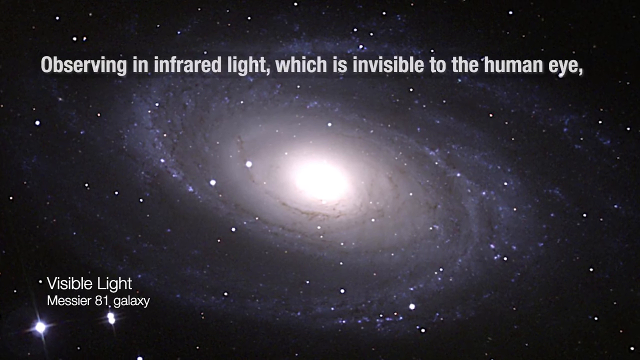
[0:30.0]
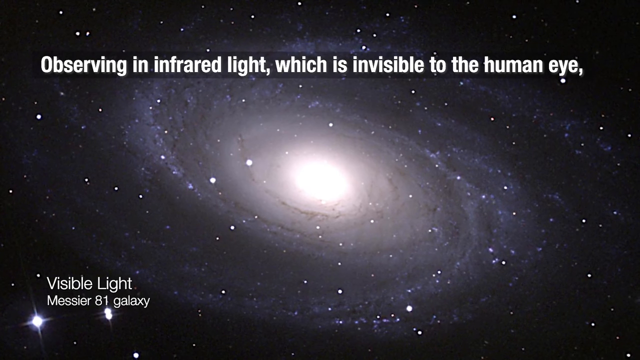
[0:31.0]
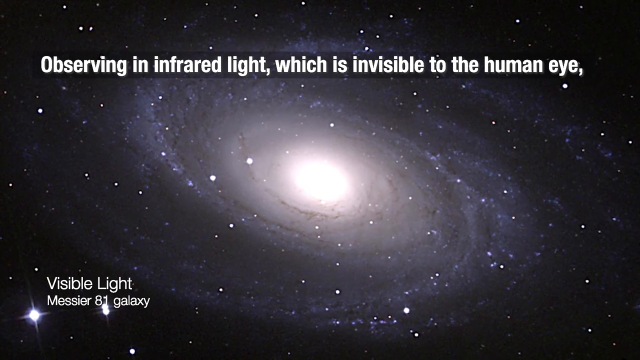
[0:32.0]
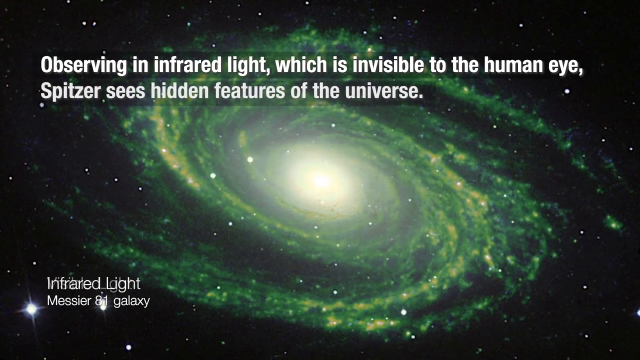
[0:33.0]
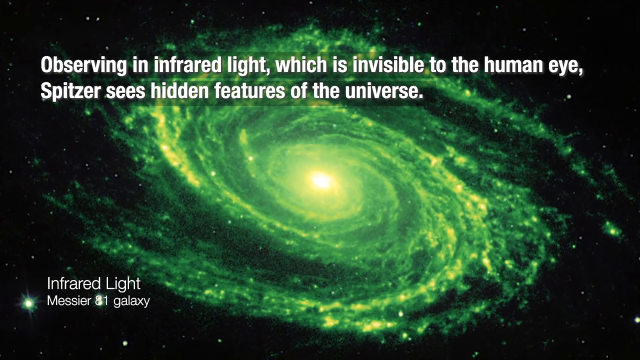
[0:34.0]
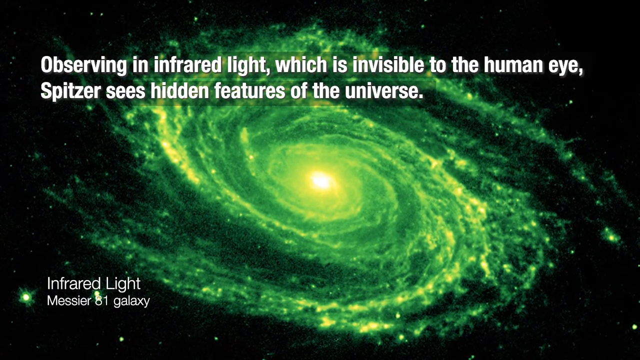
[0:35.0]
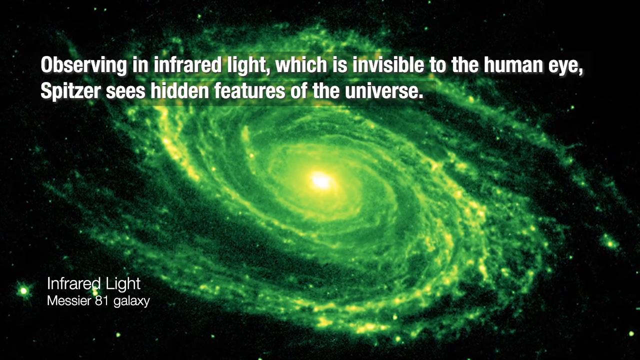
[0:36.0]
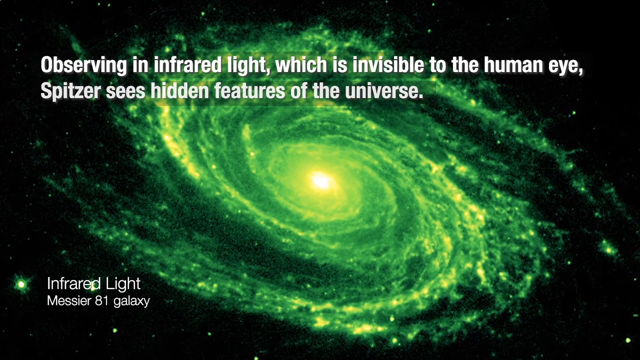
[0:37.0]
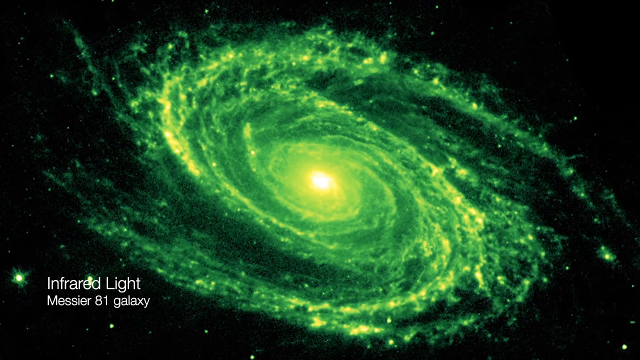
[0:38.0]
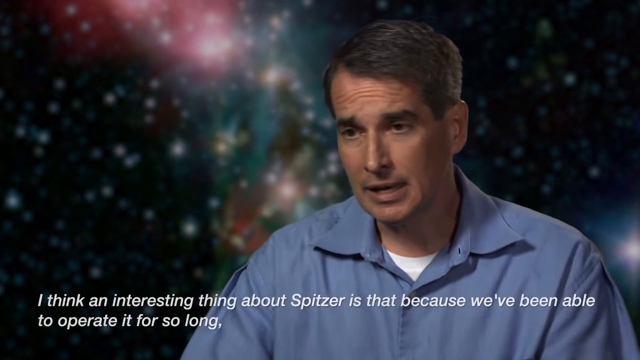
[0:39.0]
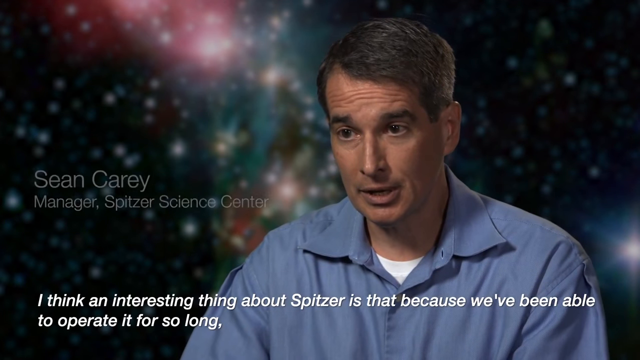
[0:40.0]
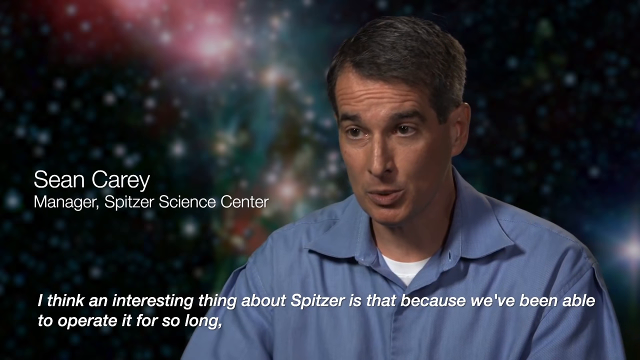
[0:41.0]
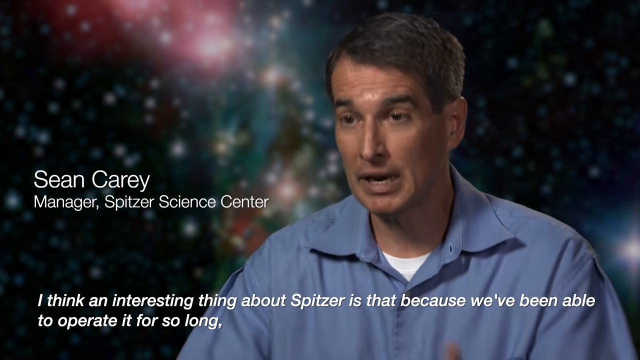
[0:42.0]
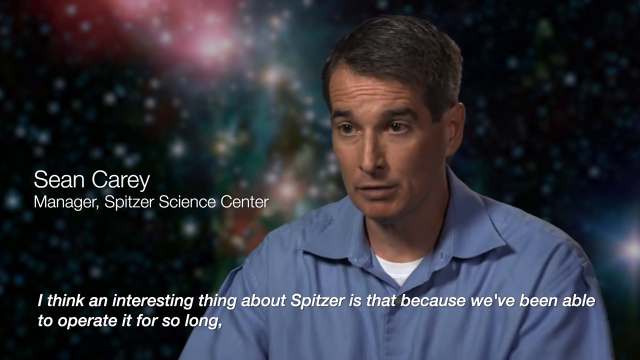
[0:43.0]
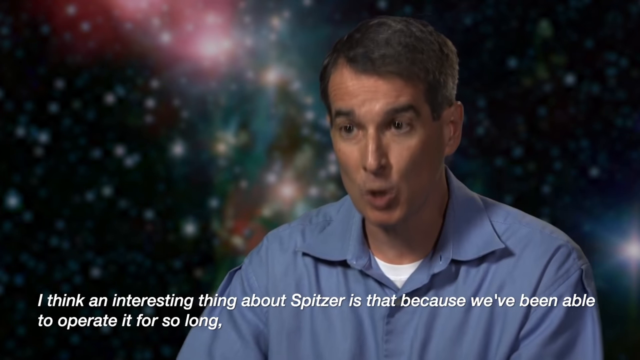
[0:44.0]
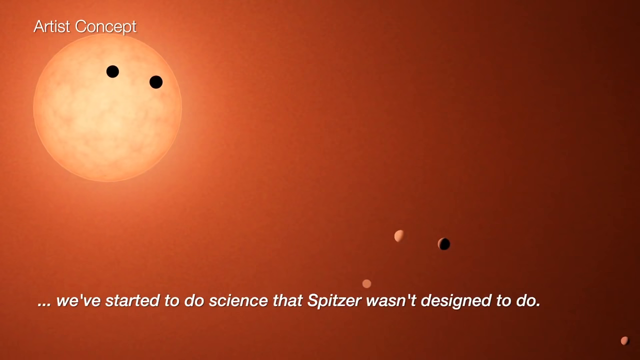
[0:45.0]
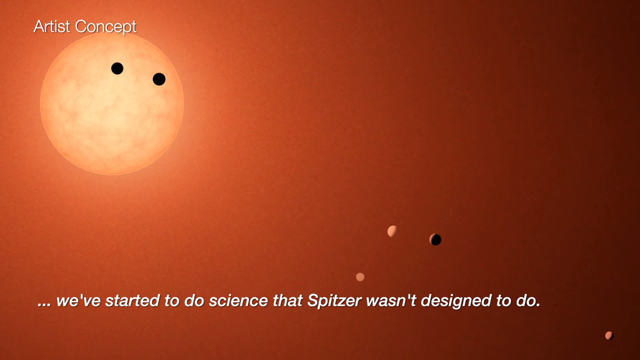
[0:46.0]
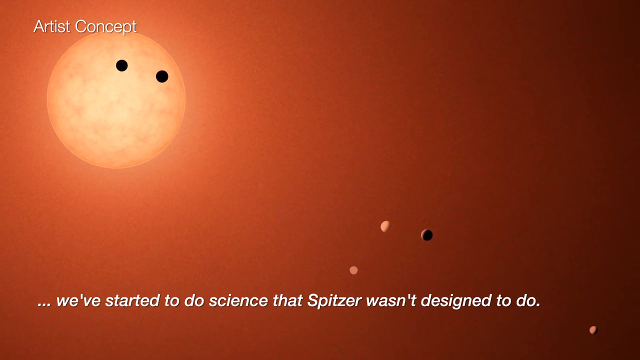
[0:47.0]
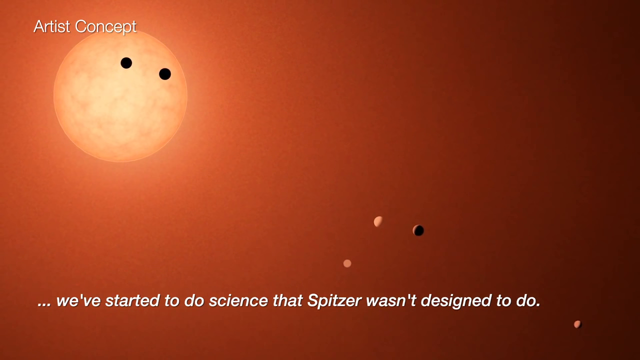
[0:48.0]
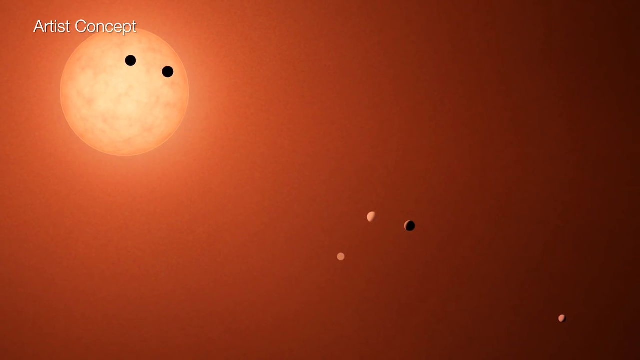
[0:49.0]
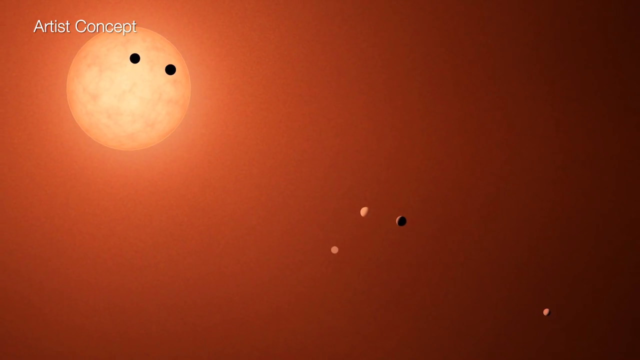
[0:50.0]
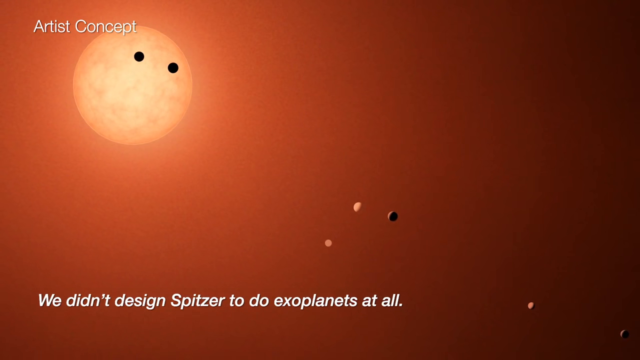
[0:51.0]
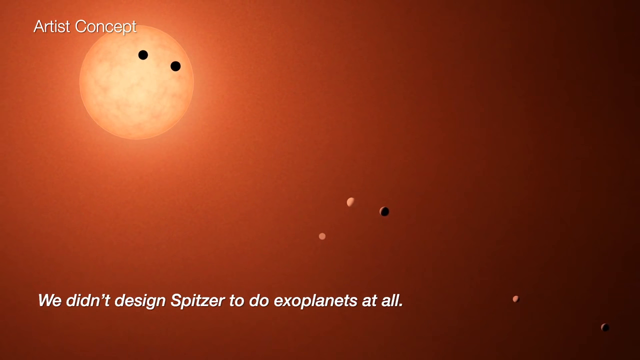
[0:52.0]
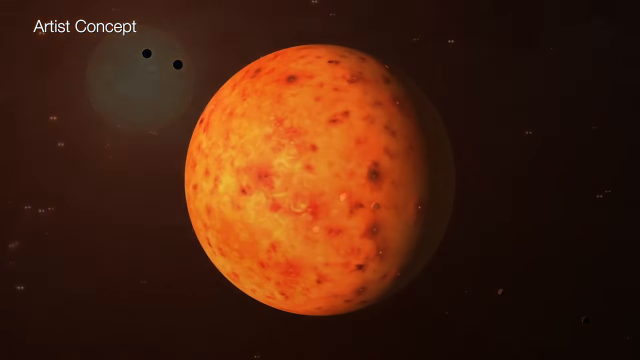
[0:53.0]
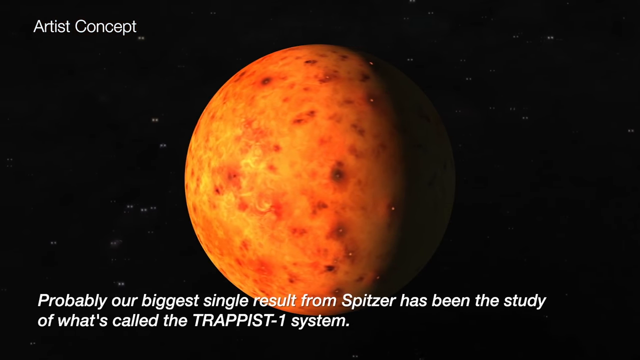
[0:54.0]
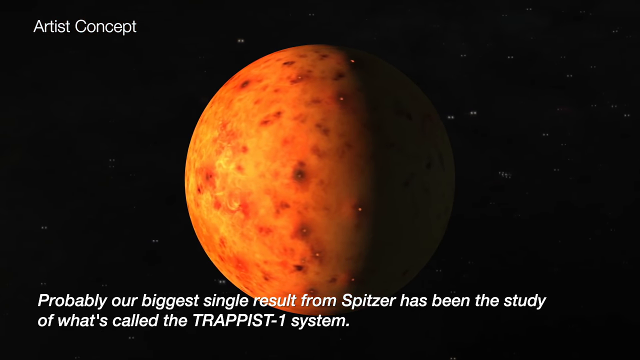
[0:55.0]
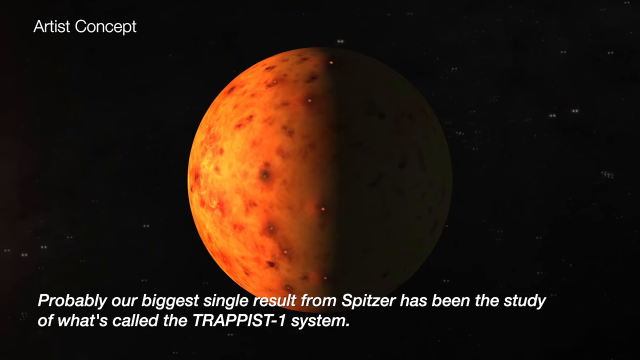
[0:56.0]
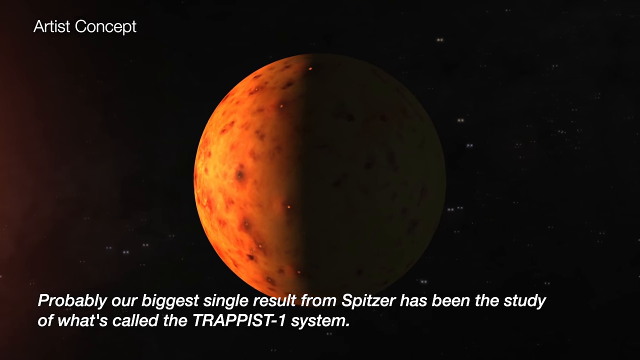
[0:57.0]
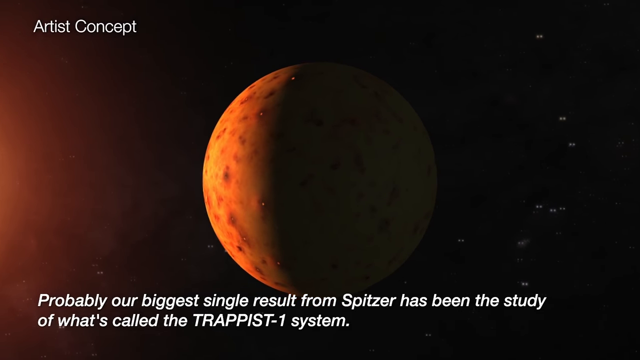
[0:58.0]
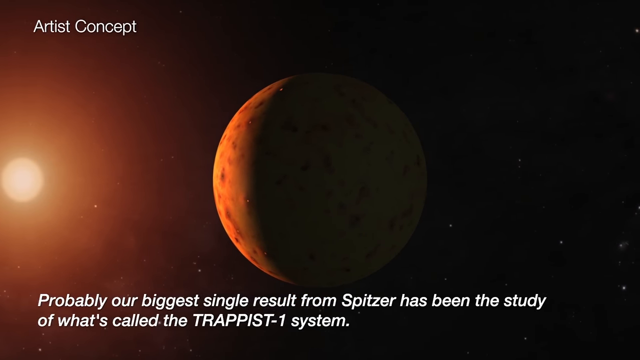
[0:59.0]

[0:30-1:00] A computer-generated galaxy in outer space has a very bright, circular white light at its middle, with swirls extending outward from it. Text in the bottom left reads "visible light, Messier 81 Galaxy". The image fades, and the same galaxy shape appears in green, with the bottom left still showing the Messier Galaxy but now reading "infrared light". The galaxy turns clockwise, drifting around. Next, a seated man talks in front of an outer space background. He talks pretty intently, blinks a lot and moves his head. His arms are not really visible except the top of his arm, but glimpses of his shoulder moving show that he is moving at least his left hand or left arm.